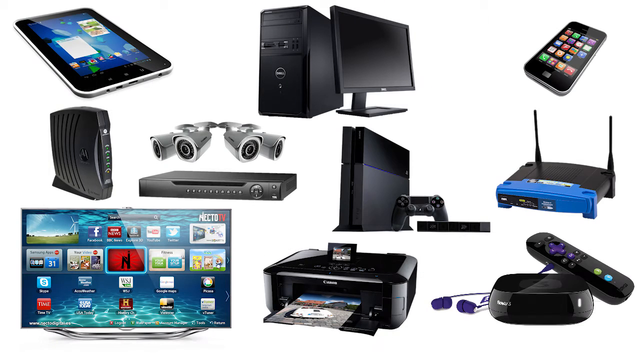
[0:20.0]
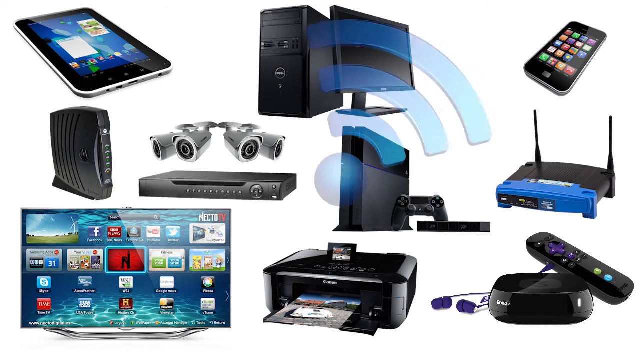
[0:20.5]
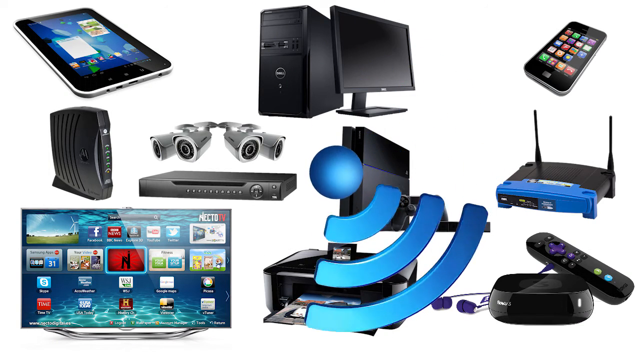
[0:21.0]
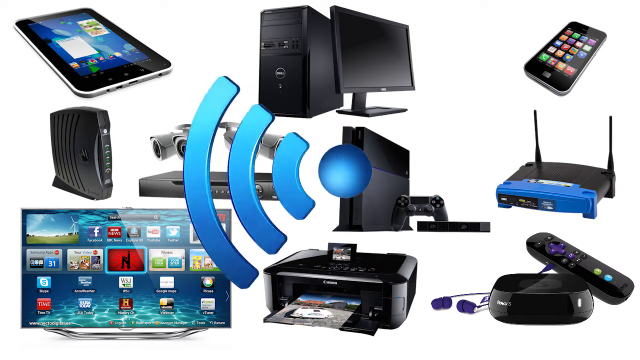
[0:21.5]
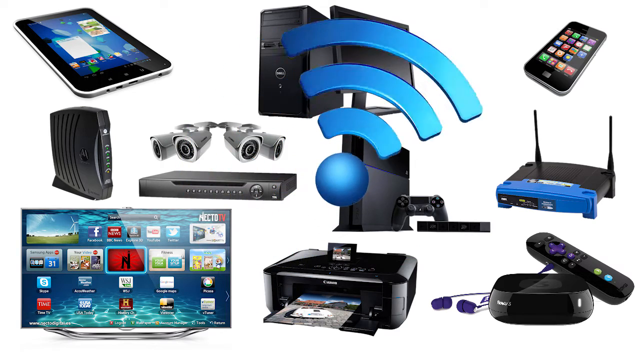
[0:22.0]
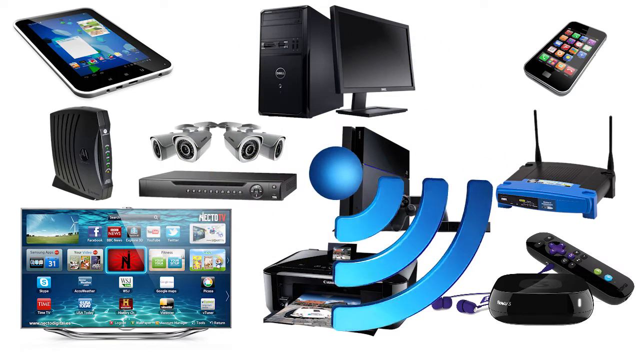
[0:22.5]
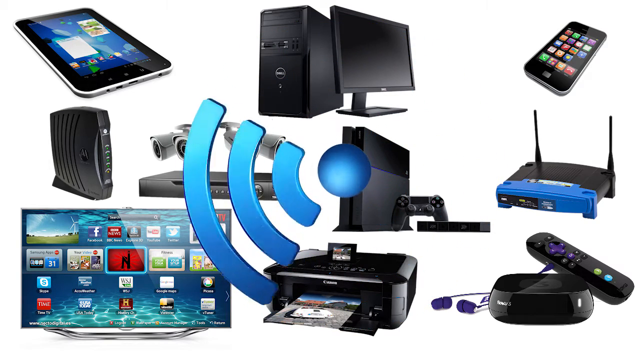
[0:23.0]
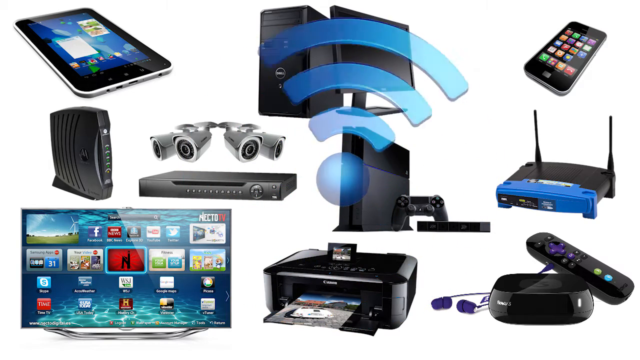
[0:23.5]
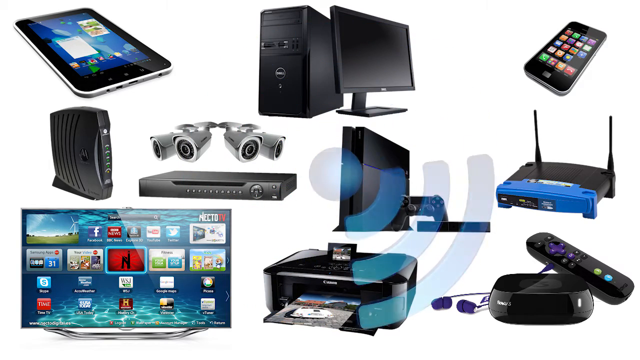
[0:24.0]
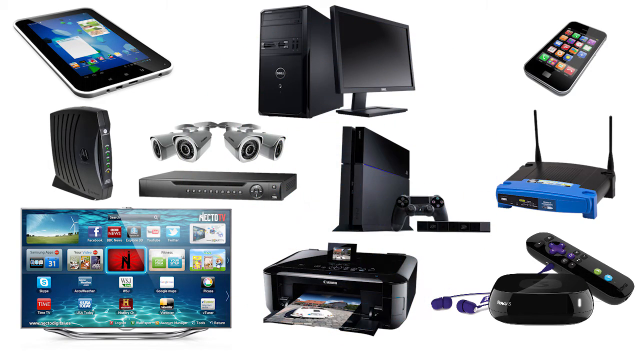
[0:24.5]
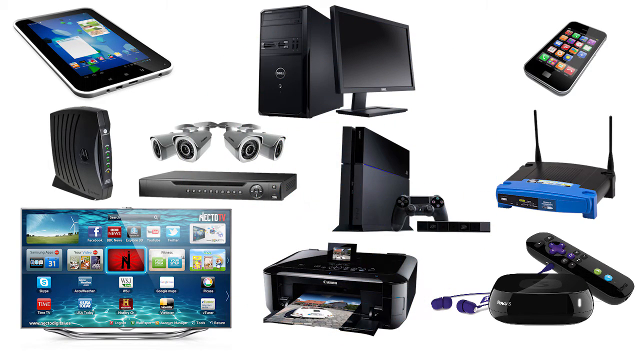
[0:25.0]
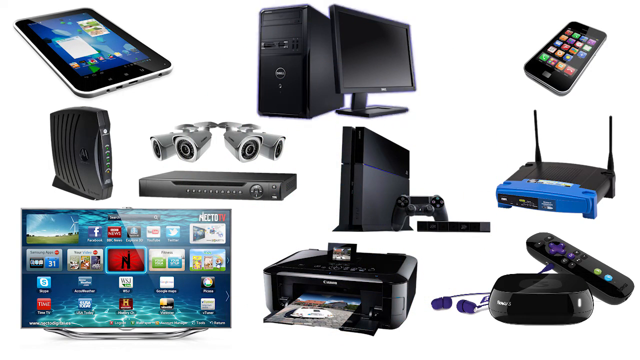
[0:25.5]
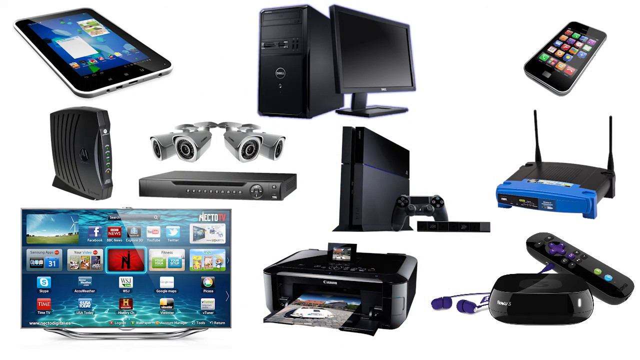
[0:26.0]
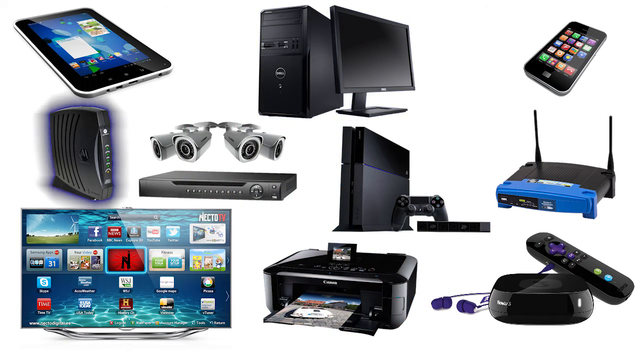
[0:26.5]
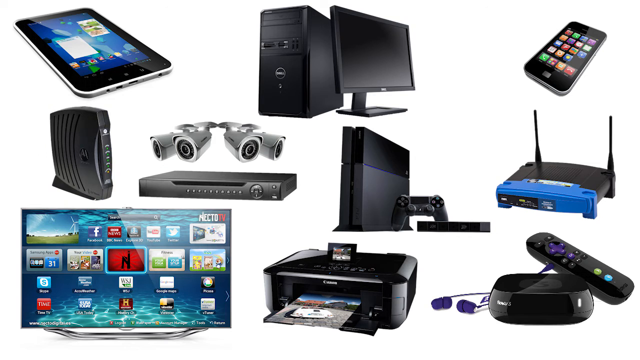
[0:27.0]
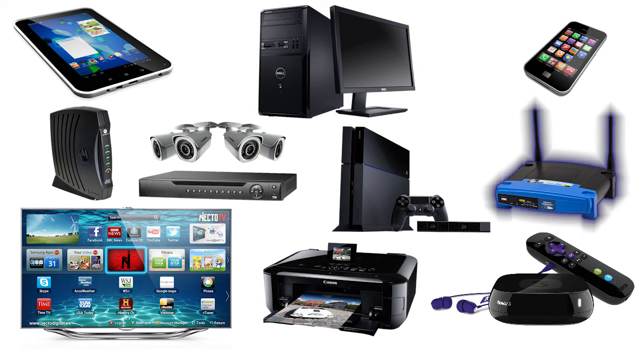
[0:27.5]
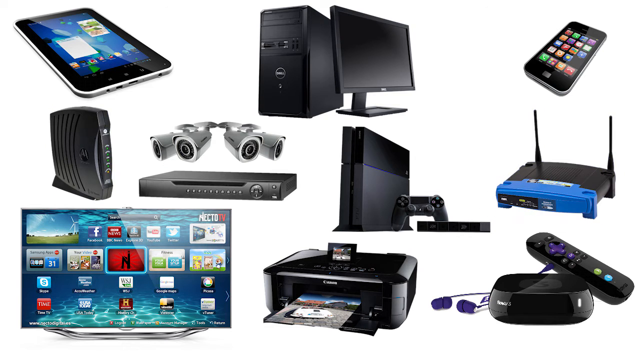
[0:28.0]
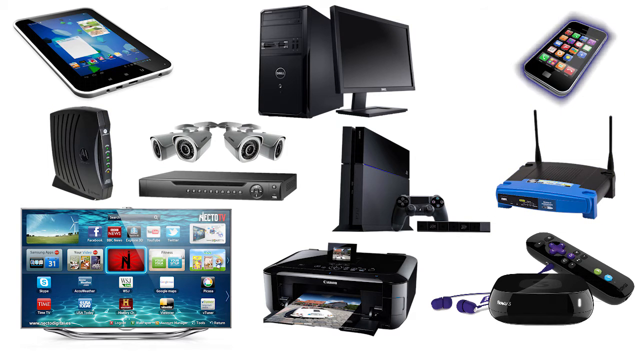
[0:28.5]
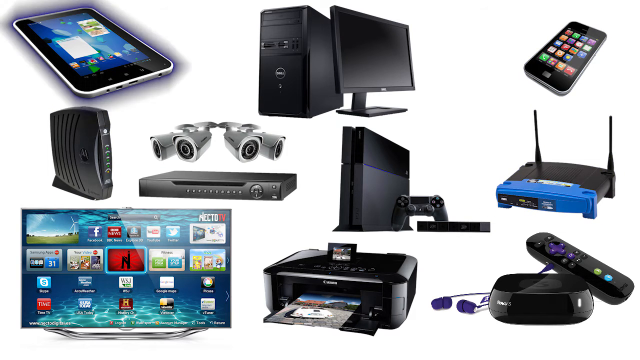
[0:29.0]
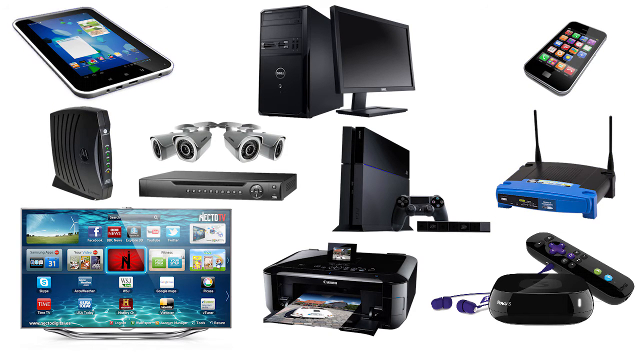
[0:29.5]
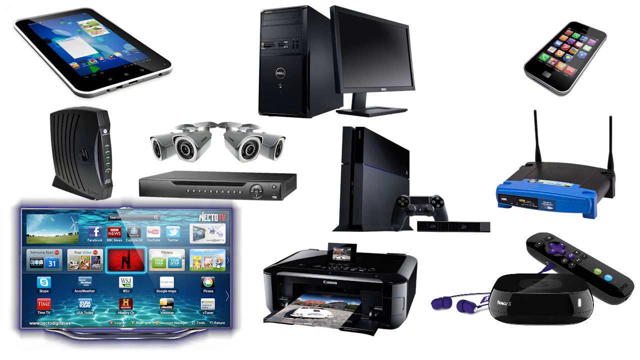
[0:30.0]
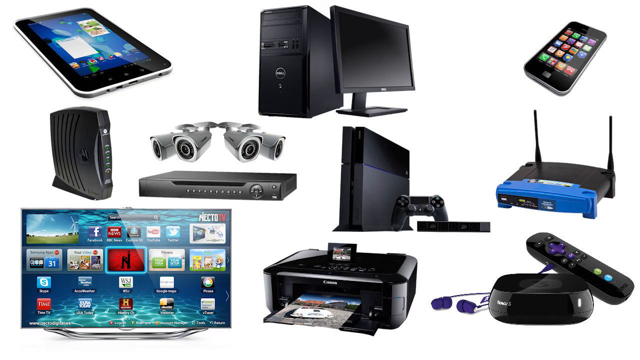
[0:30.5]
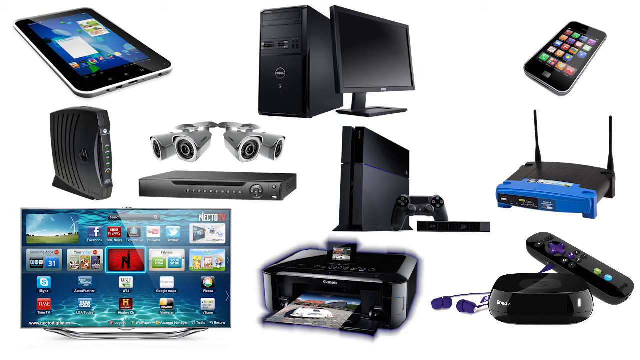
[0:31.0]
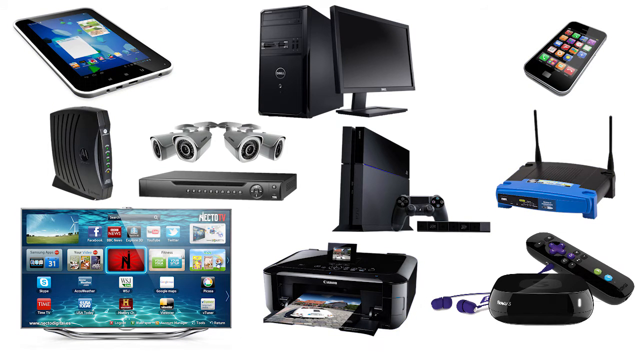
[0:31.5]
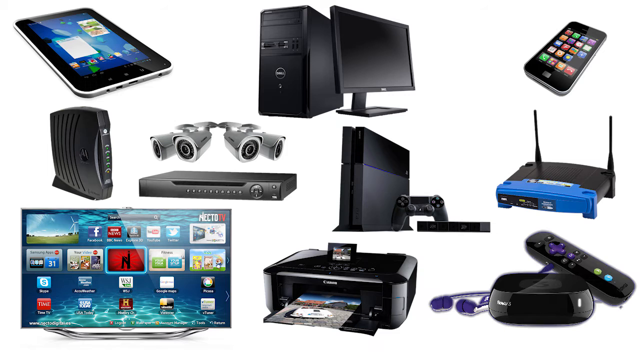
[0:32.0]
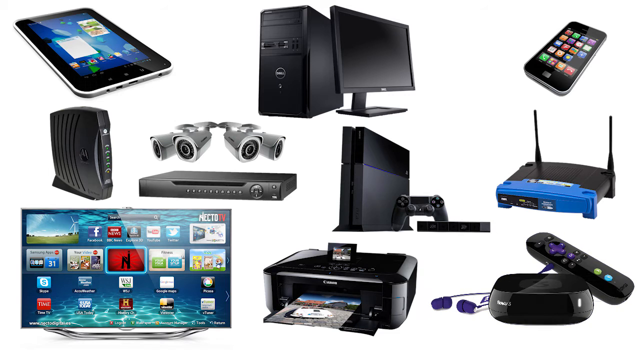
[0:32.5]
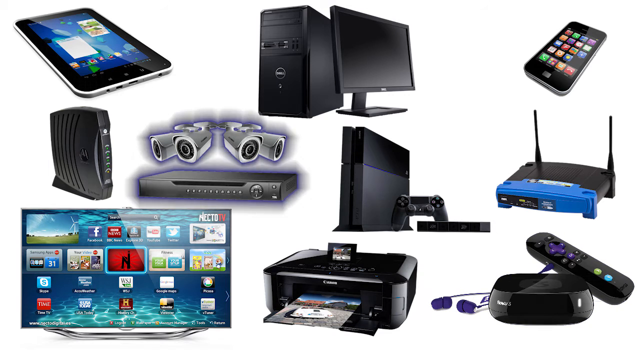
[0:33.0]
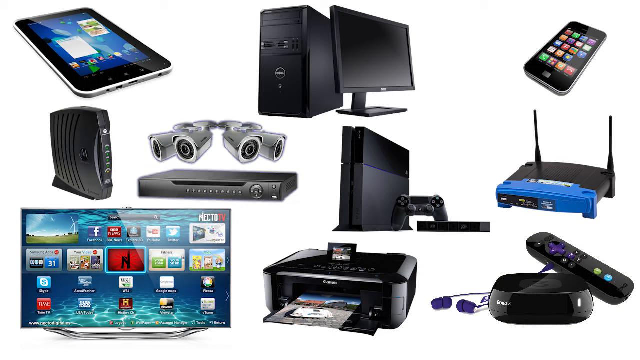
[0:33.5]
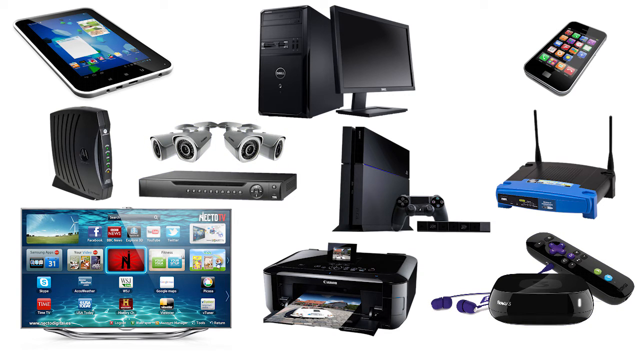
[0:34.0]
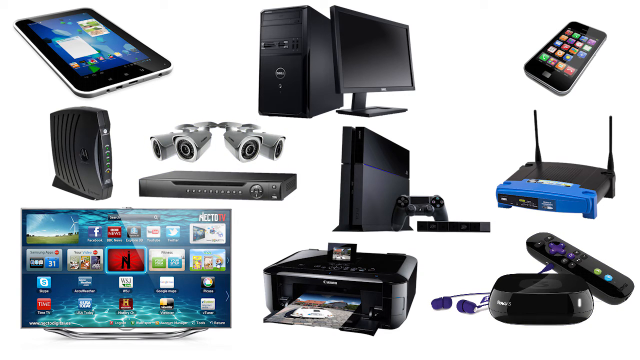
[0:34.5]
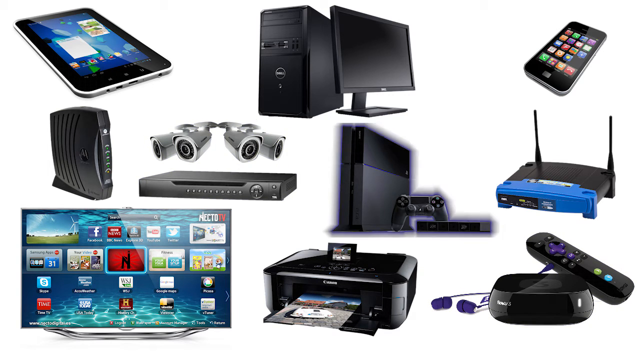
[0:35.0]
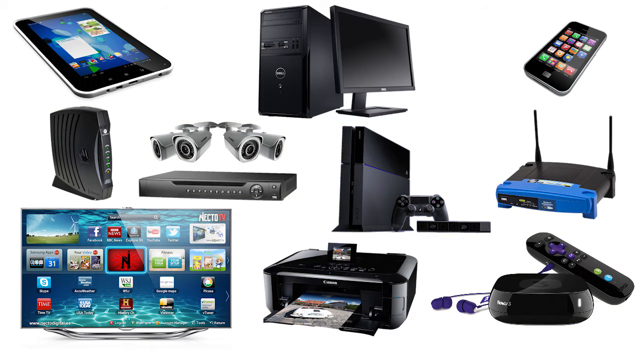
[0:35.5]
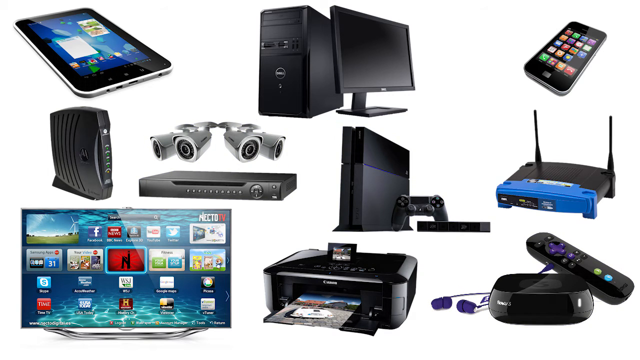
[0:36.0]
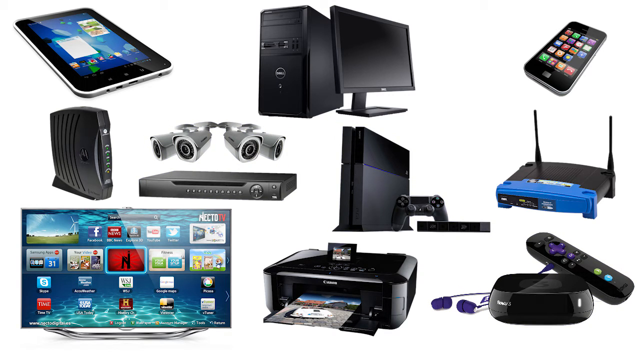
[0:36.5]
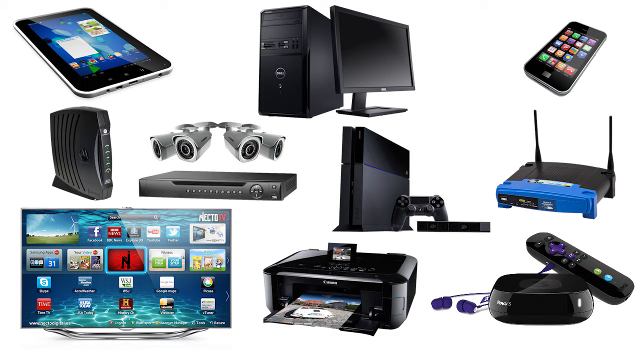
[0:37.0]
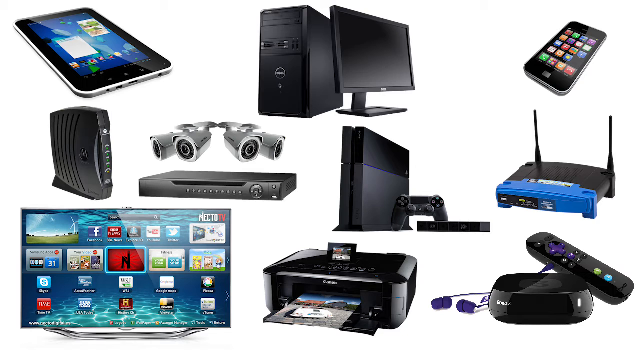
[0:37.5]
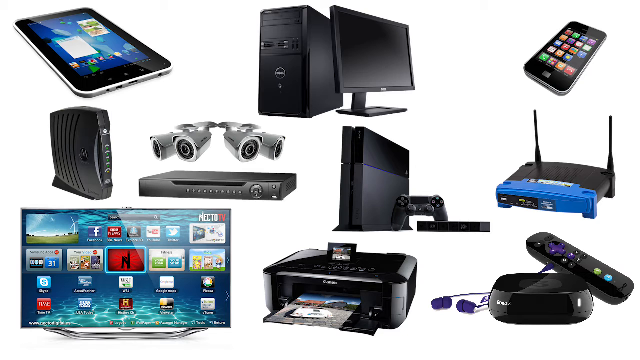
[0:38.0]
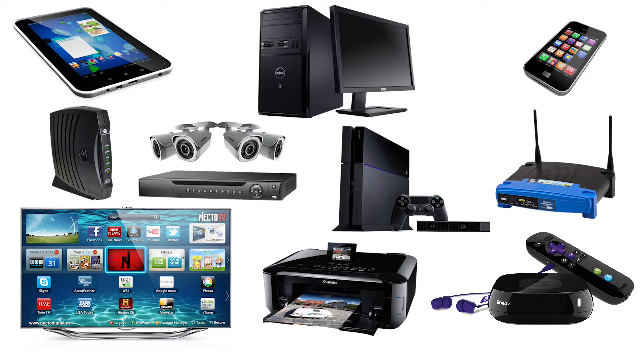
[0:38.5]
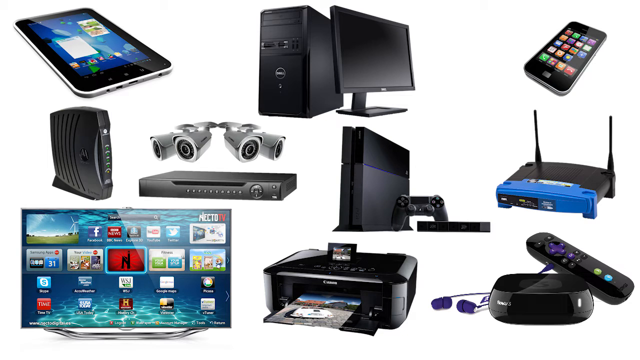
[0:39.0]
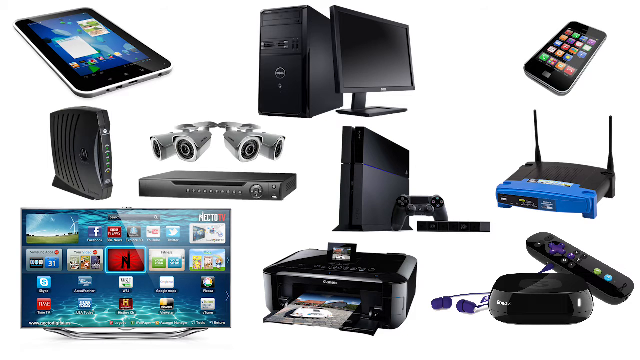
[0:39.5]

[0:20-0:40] The various items of technology remain displayed on the white screen. A computer-rendered graphic fades into the centre: a blue sphere radiating three curved bands that give the impression of radar waves or broadcast signals. The symbol rotates clockwise, slightly off axis, for a couple of rotations before fading out. The items then have a grey border shading pulse around them one by one, as if to highlight them: the computer monitor and tower computer, the router on the left, the router on the right, the iPhone, the tablet, the TV, the printer, the remote control for the speaker system, the ceiling-mounted lights and DVD player, and the PlayStation. In a staggered series, the objects then start to move into the centre of the screen.